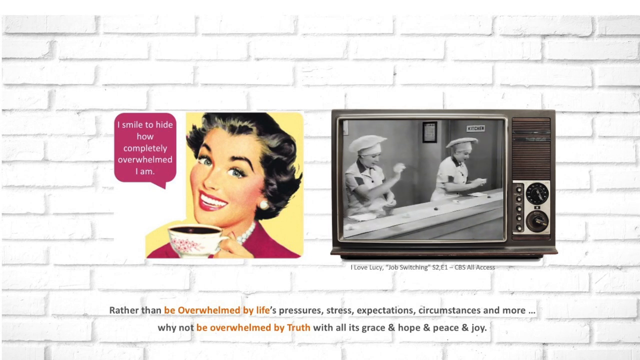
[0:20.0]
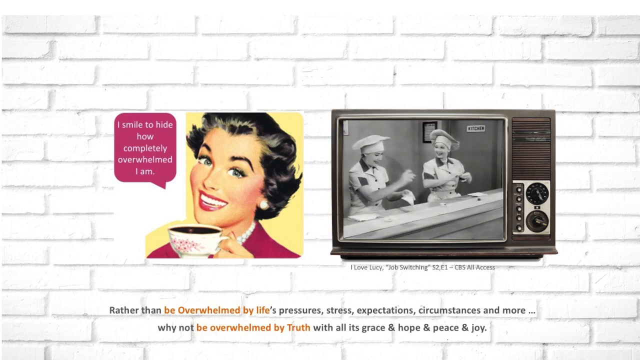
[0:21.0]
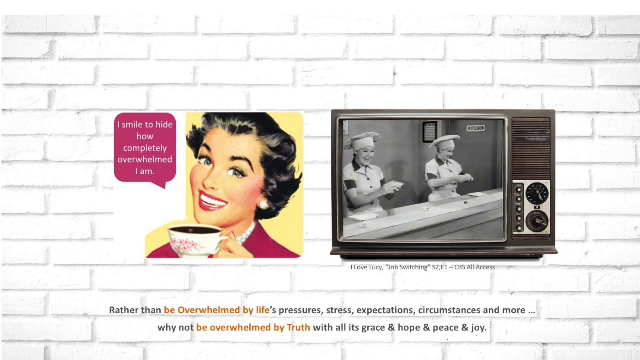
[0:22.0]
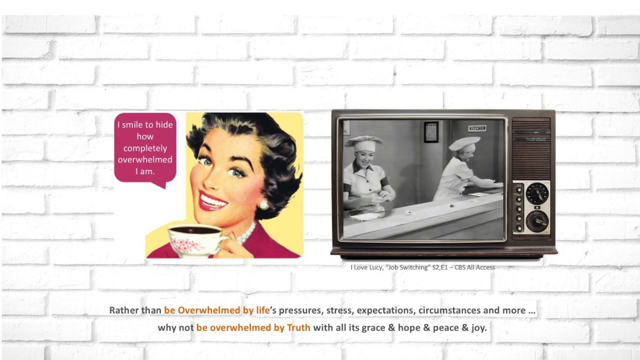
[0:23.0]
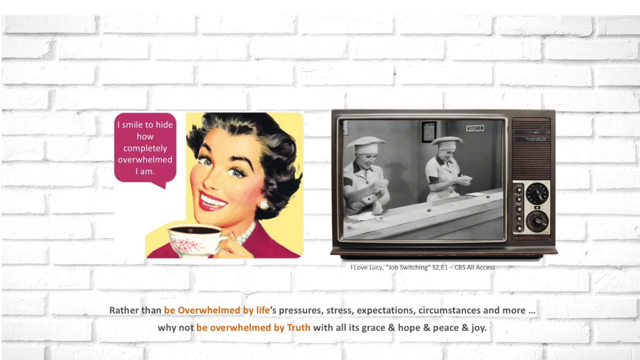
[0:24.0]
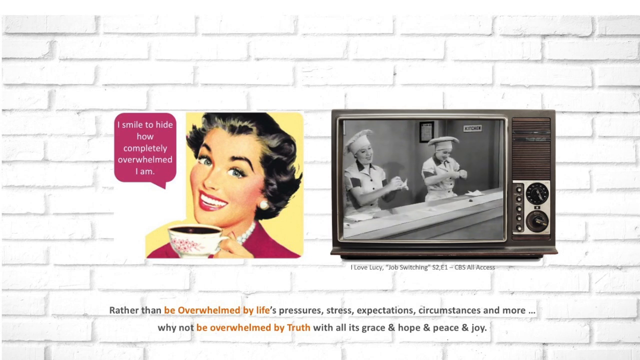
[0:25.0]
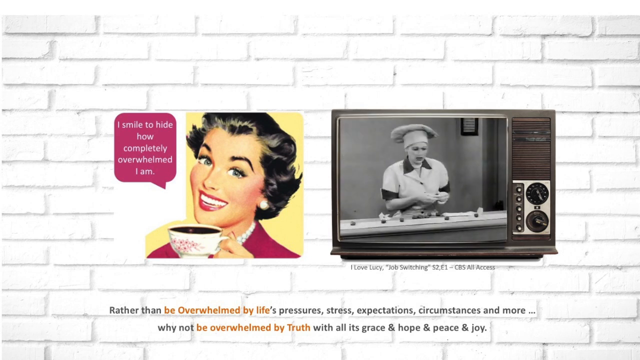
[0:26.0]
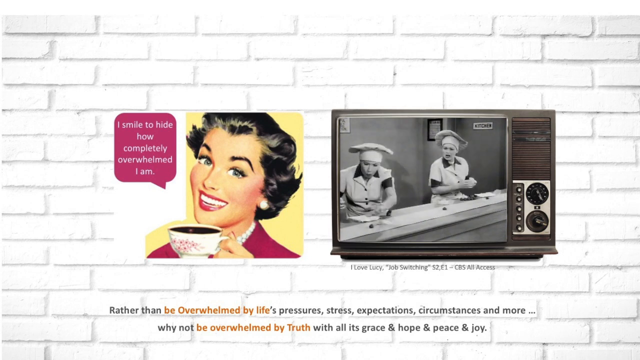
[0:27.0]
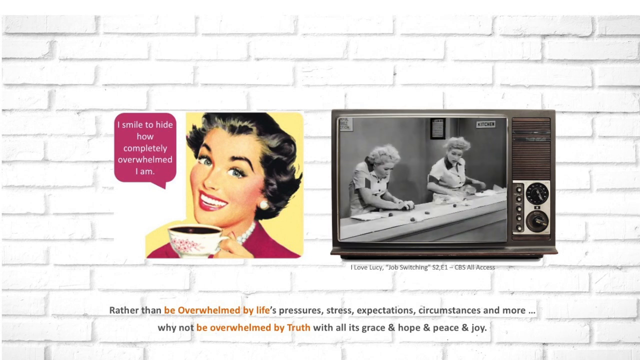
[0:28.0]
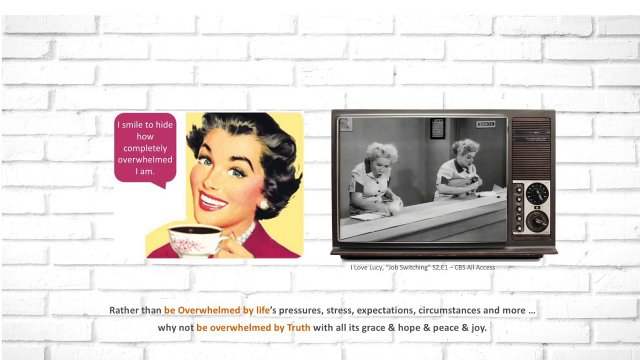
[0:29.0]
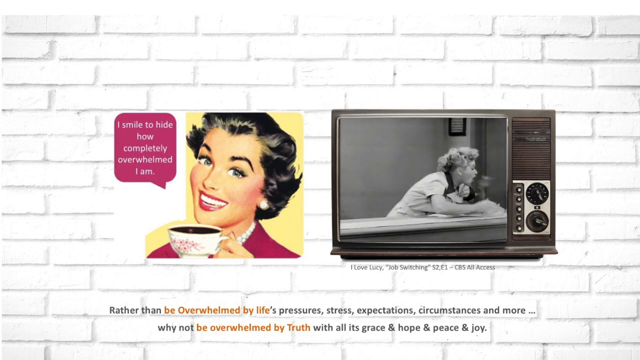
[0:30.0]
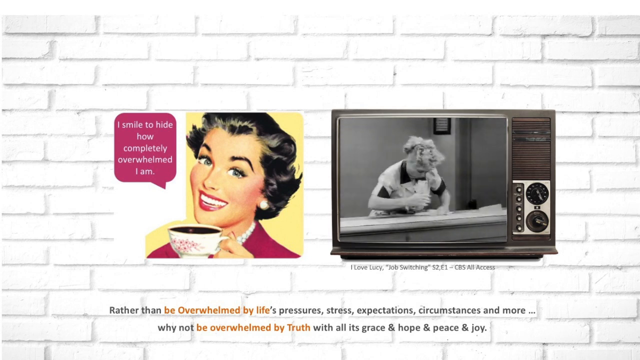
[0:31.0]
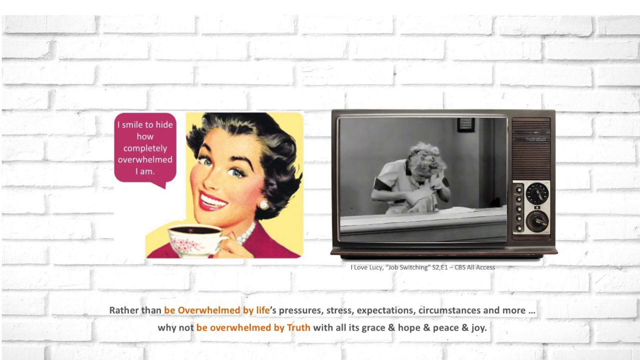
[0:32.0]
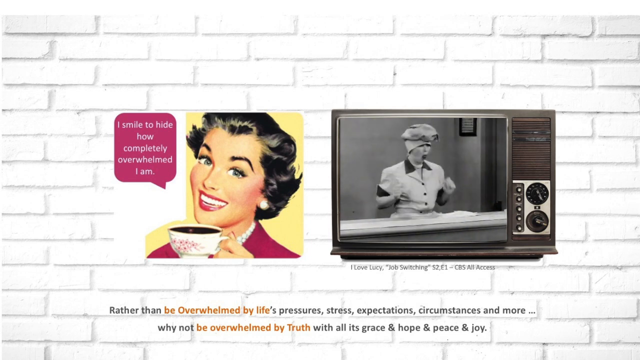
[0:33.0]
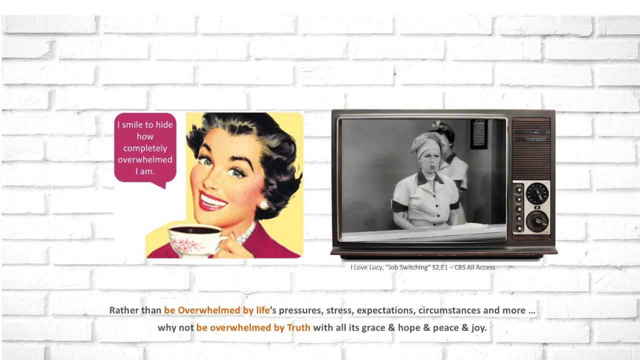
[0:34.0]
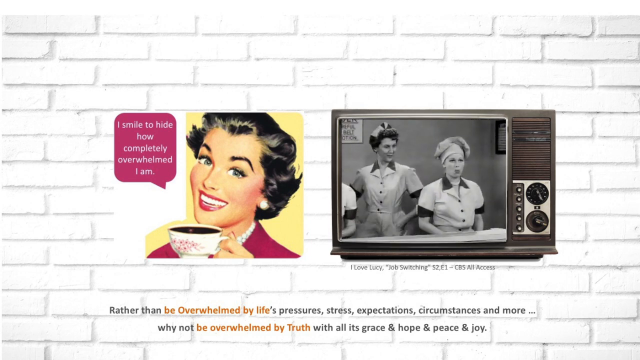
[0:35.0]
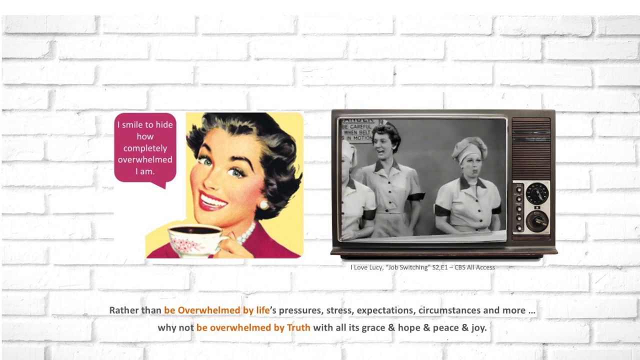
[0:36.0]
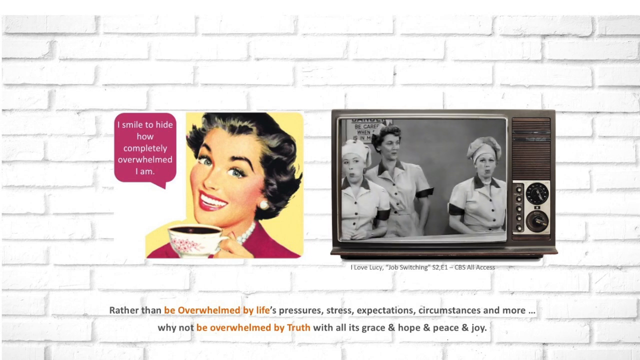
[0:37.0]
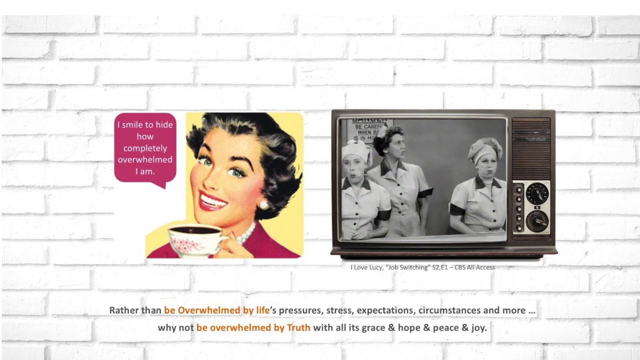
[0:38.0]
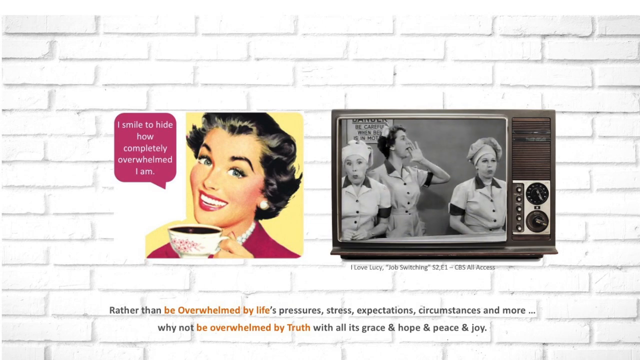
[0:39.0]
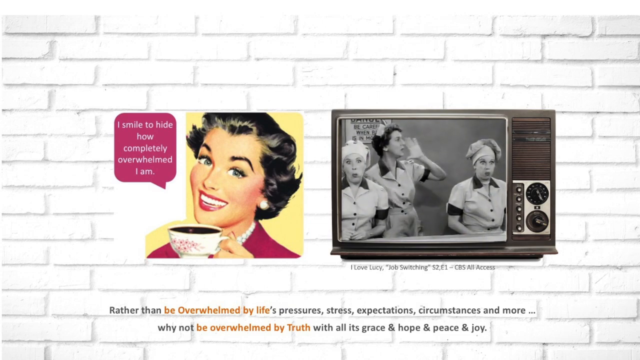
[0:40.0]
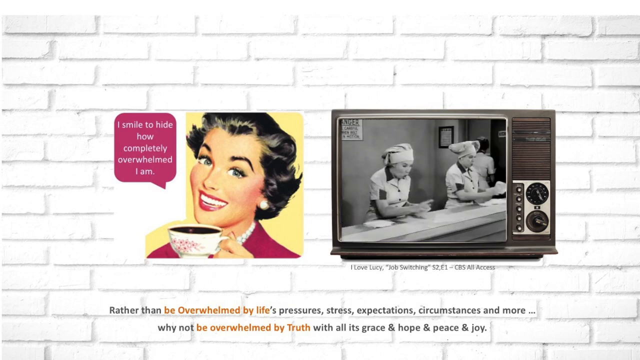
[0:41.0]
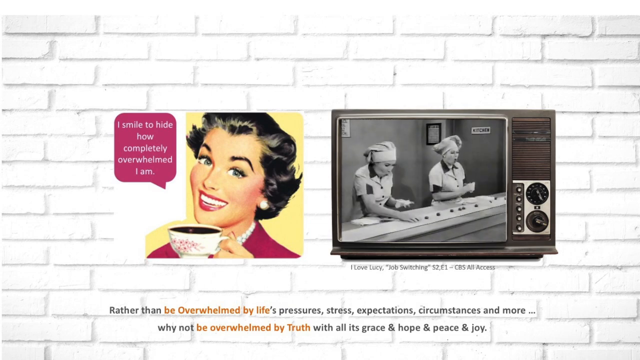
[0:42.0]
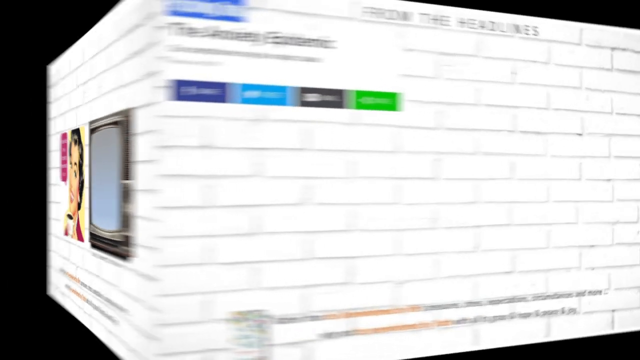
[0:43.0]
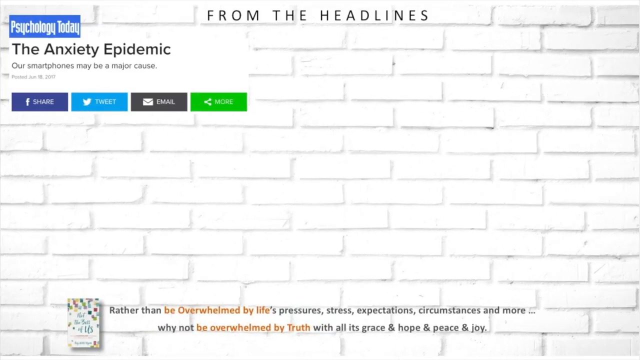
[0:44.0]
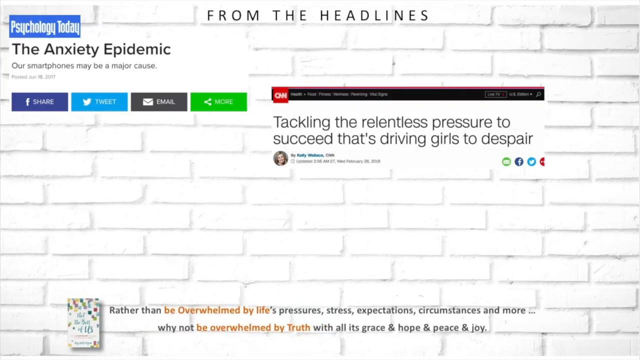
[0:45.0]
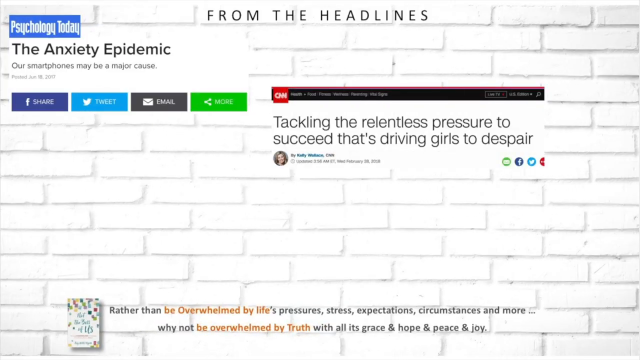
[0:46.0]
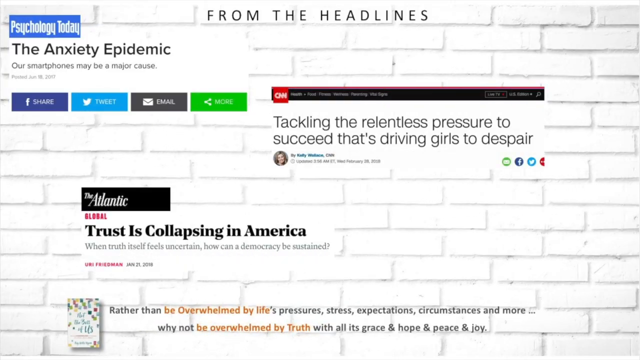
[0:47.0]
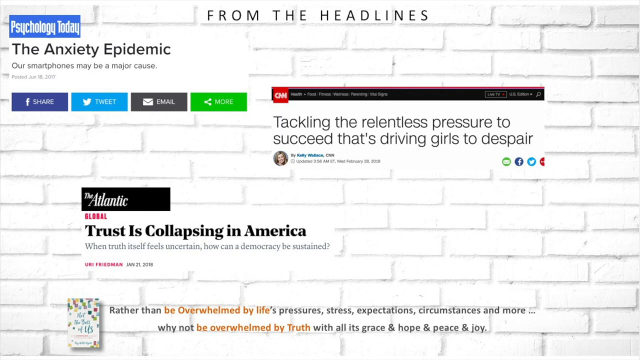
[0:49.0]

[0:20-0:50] The black-and-white scene from an old TV show continues: the two women in factory uniforms work at a fast-moving conveyor belt, trying to wrap chocolates. The belt speeds up so much that they cannot keep up, and in a panic they start hiding chocolates in their mouths, hats and clothes. Then a boss walks in, making everything even more tense. The video then shifts to a white brick wall, and headlines from big media outlets such as Psychology Today and CNN appear on screen. The headlines are about problems people face today, such as anxiety, stress, the constant push to succeed, the loss of trust and the need to be perfect all the time.